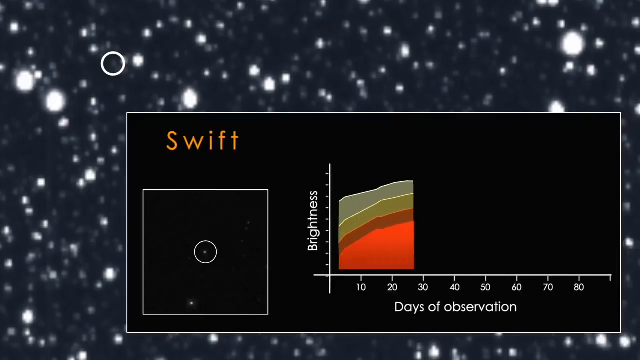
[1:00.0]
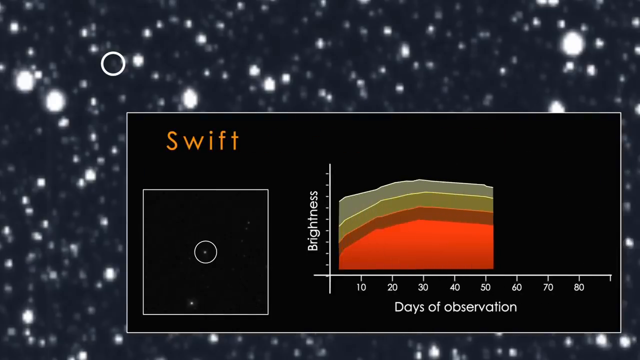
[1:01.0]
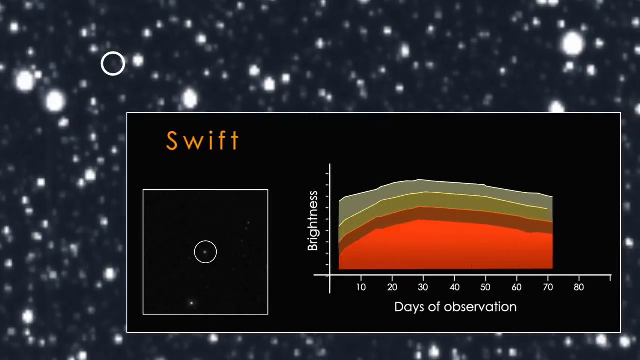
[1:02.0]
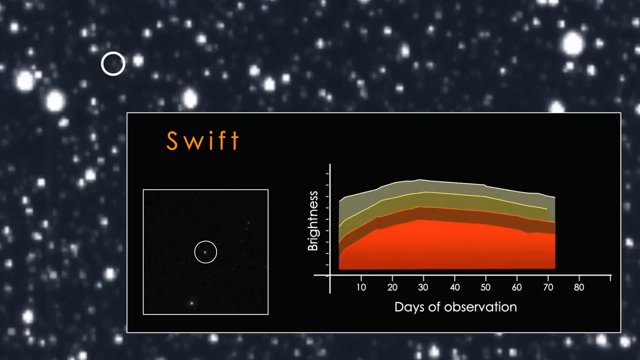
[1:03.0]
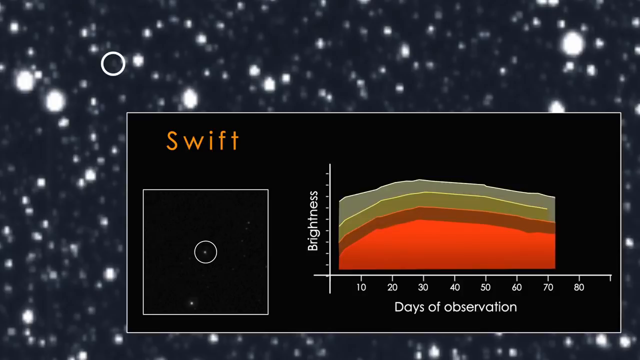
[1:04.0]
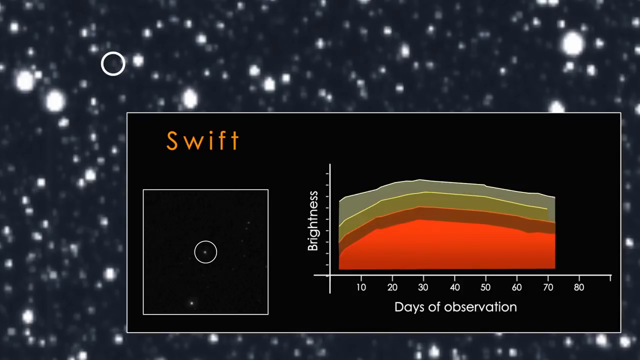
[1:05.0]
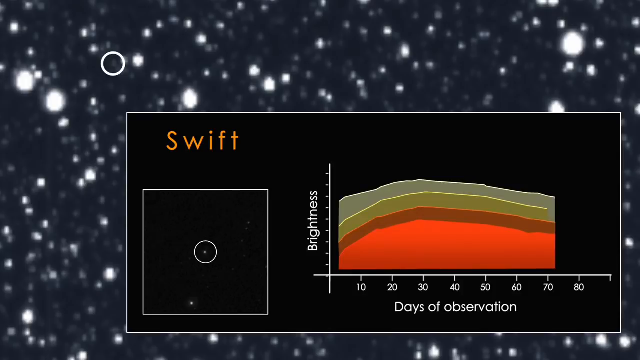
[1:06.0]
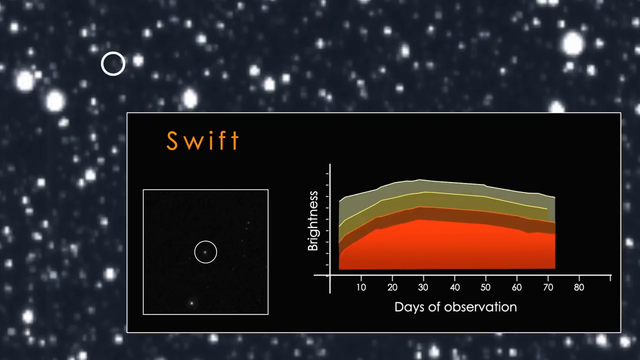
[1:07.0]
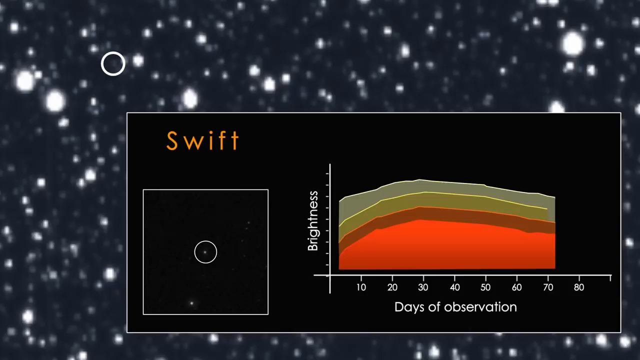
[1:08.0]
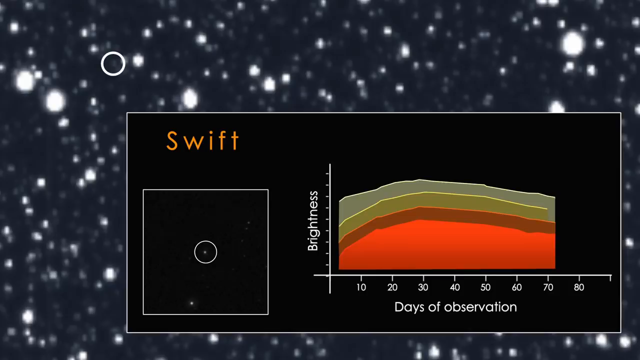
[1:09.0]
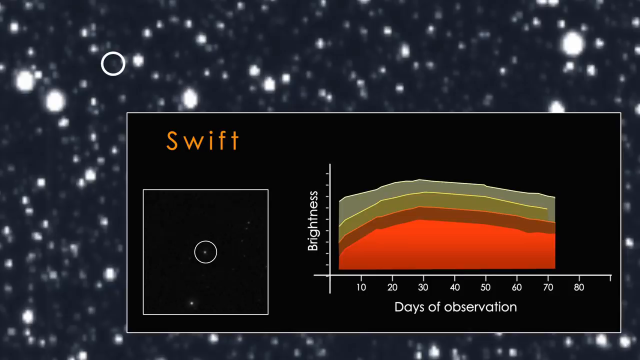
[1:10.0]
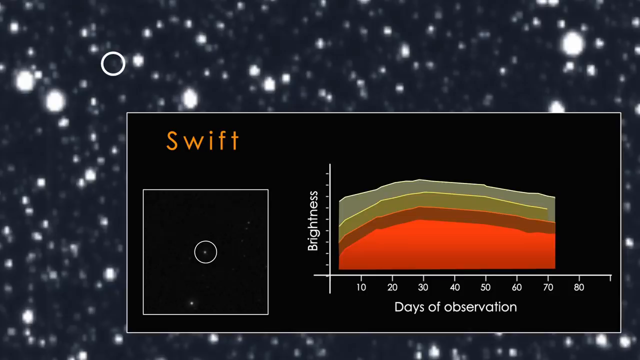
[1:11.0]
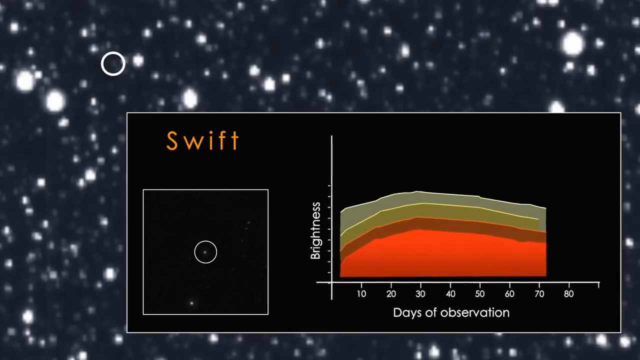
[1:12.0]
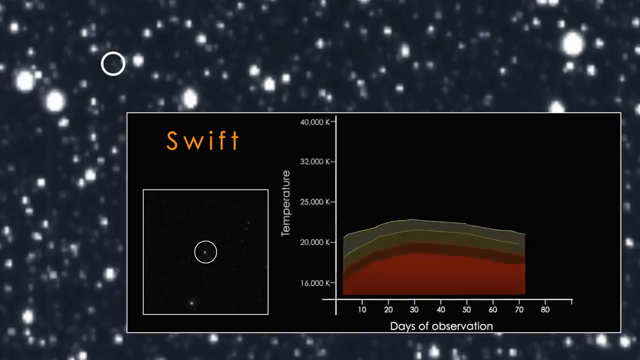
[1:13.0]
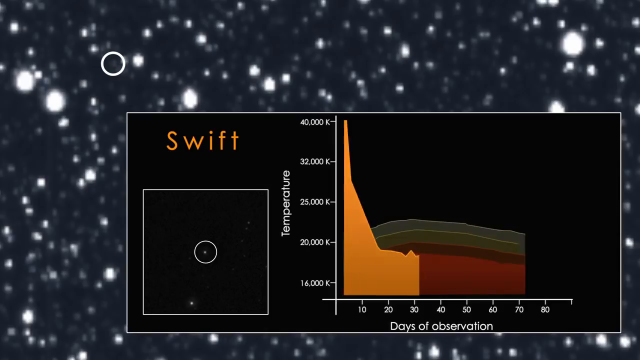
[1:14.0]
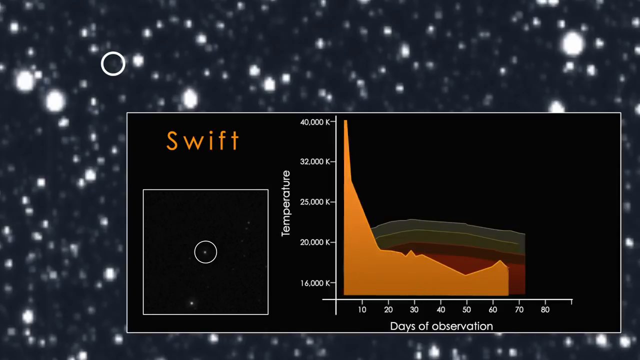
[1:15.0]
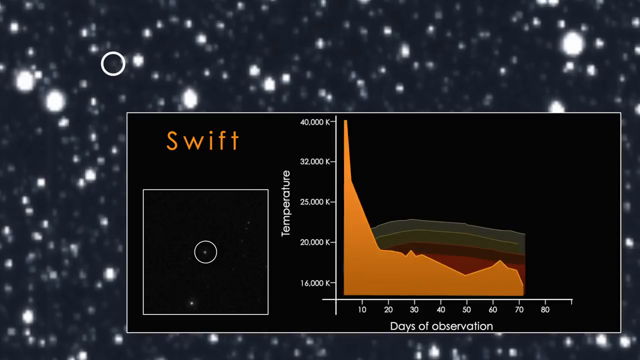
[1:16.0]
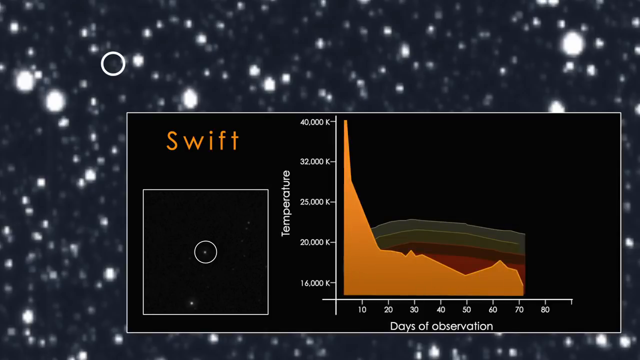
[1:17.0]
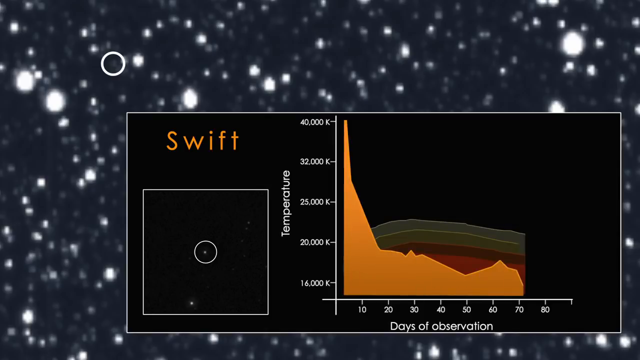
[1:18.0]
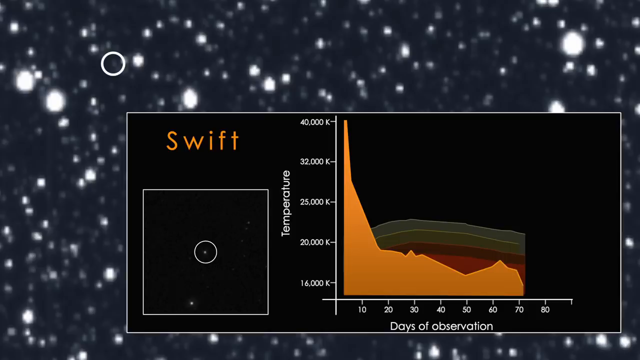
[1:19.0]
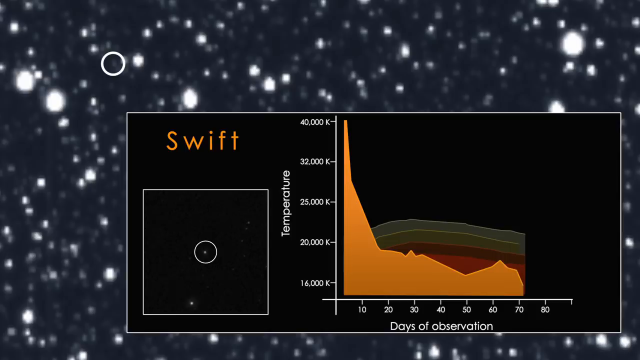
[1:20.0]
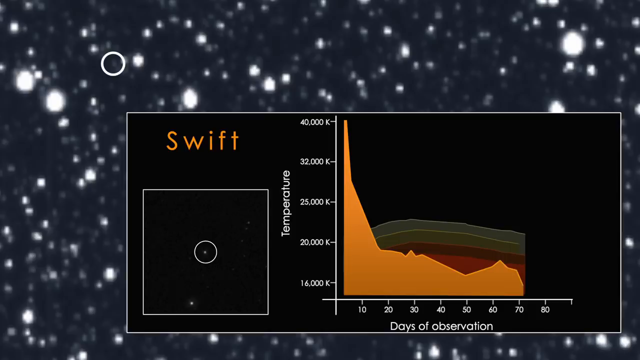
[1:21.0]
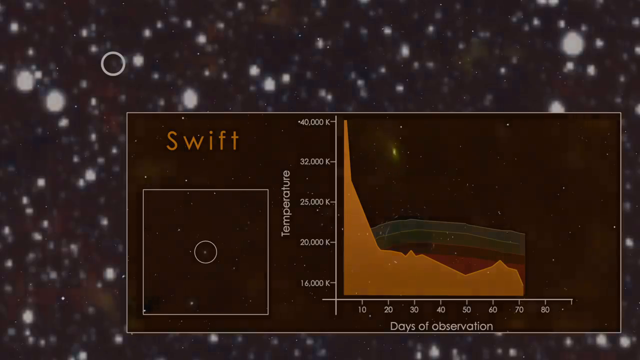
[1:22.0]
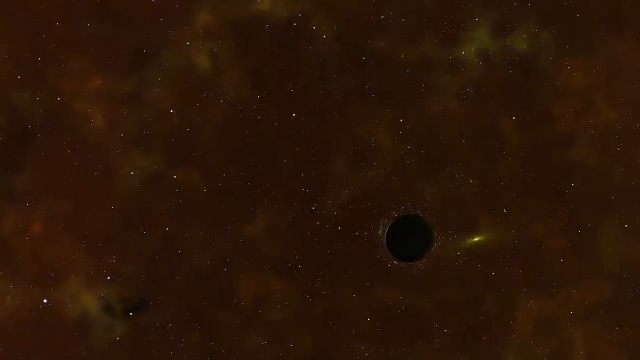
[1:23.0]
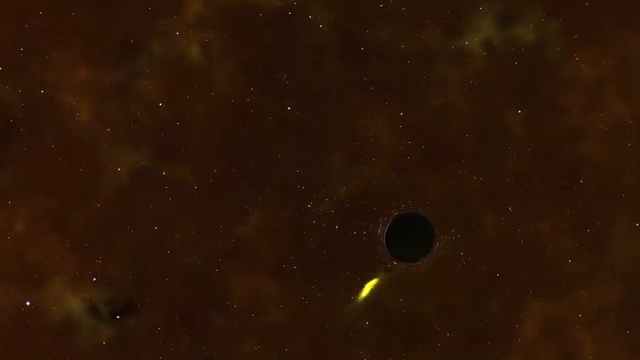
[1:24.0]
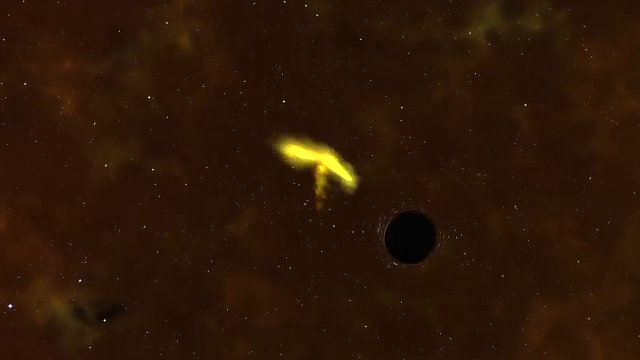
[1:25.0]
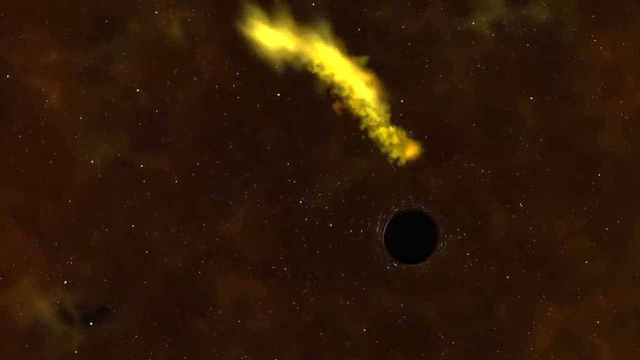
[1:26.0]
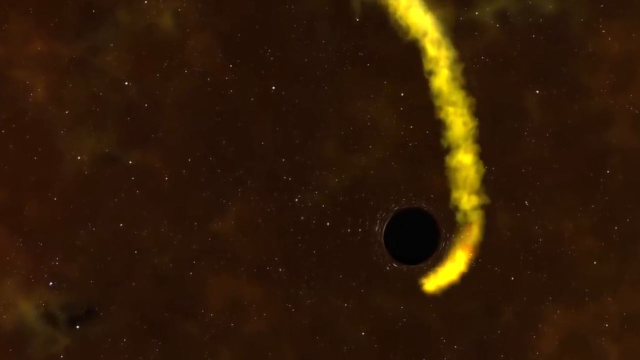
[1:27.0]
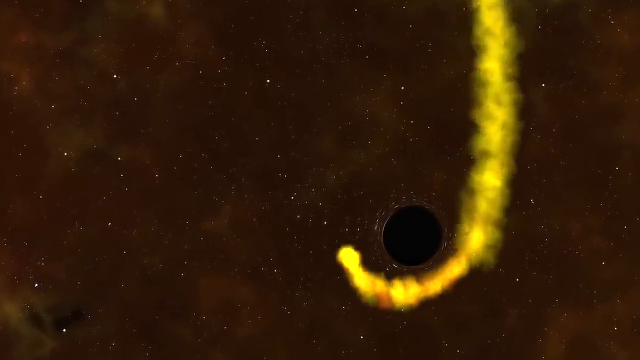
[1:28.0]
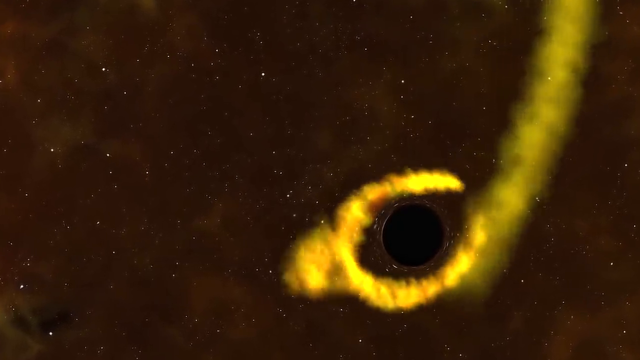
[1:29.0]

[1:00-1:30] Days of observation are shown, with 70 days, and there is possibly a satellite.